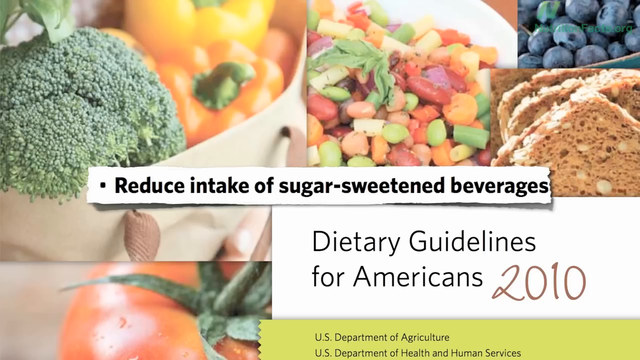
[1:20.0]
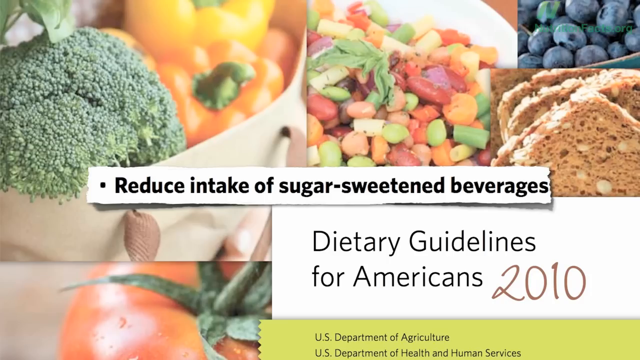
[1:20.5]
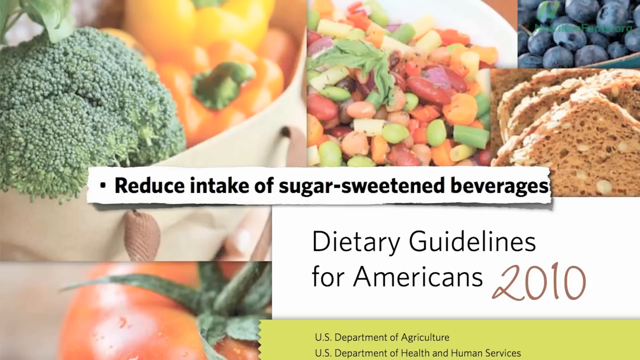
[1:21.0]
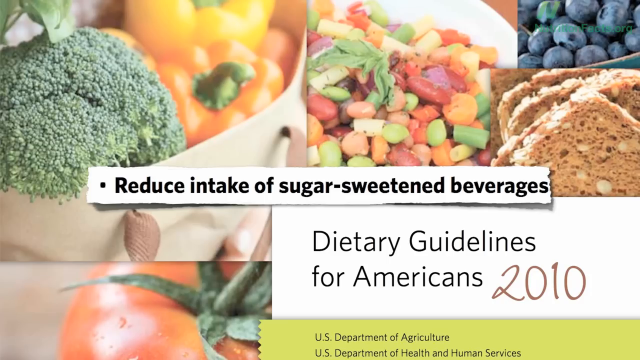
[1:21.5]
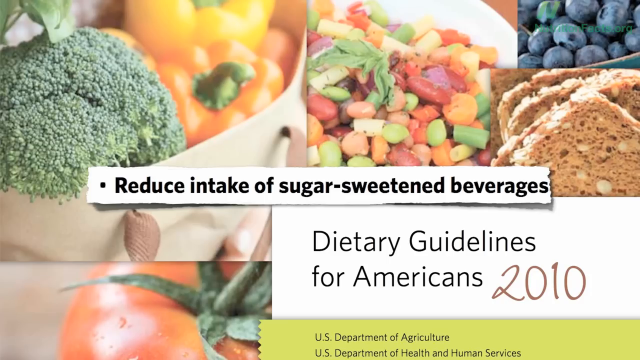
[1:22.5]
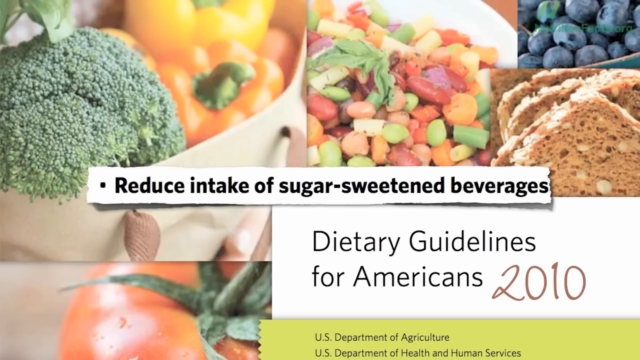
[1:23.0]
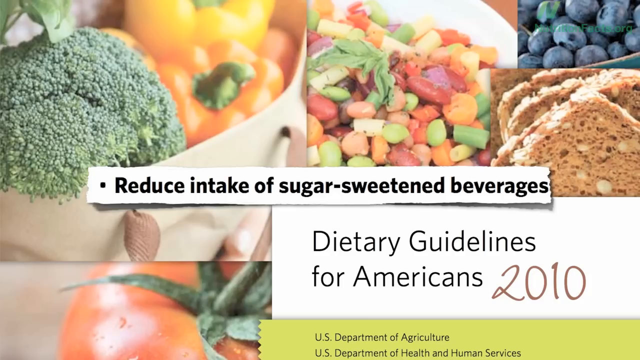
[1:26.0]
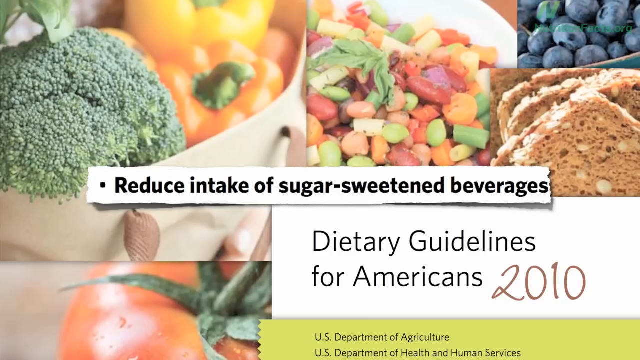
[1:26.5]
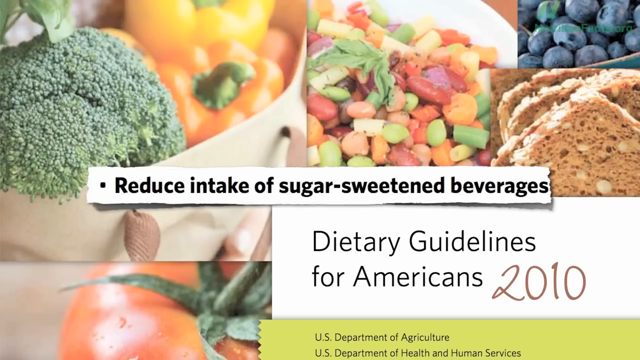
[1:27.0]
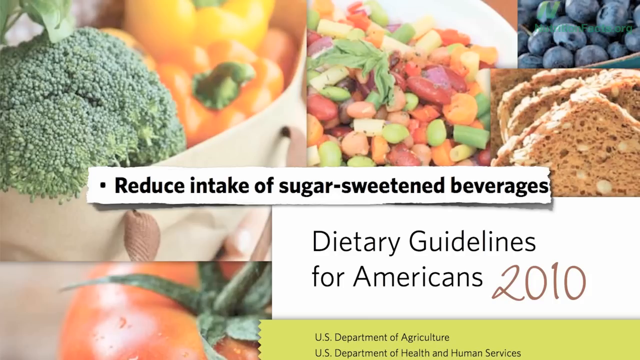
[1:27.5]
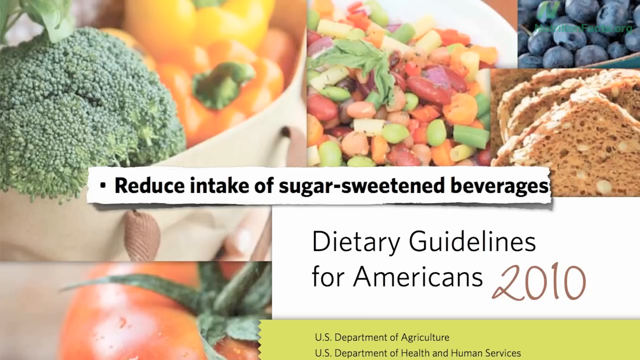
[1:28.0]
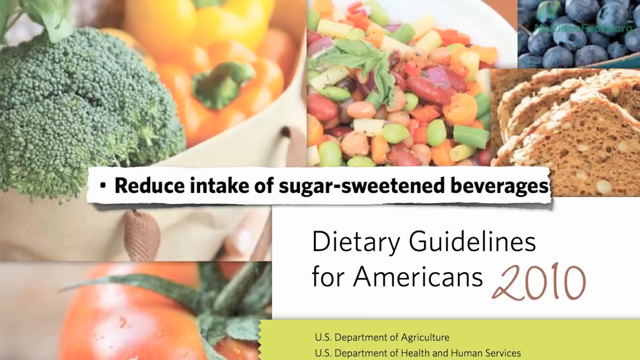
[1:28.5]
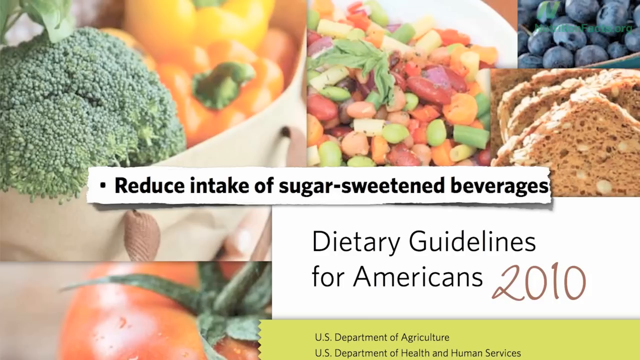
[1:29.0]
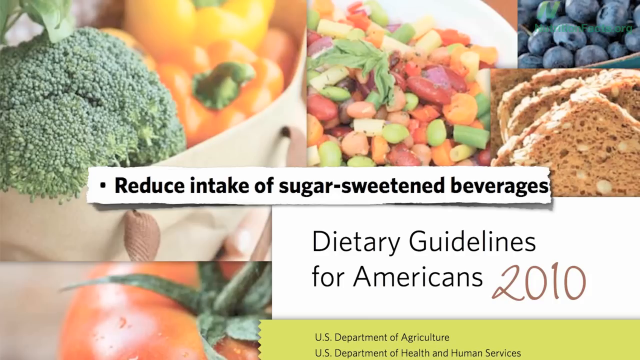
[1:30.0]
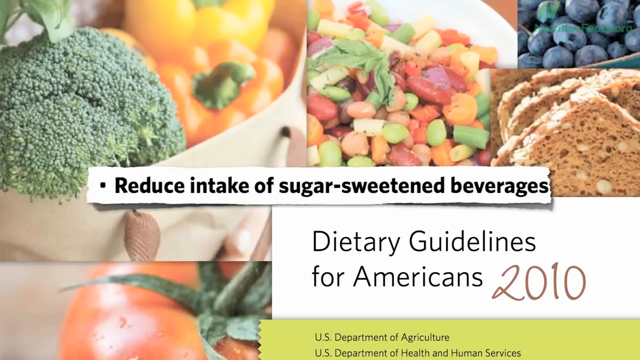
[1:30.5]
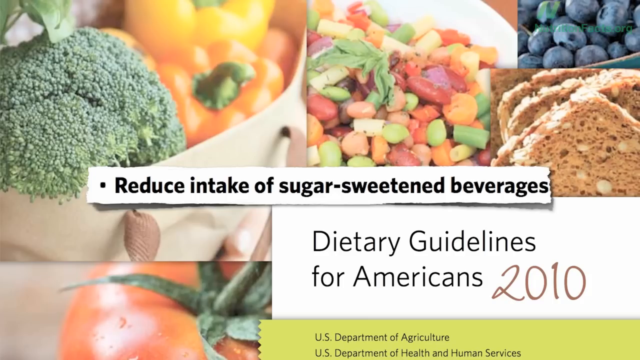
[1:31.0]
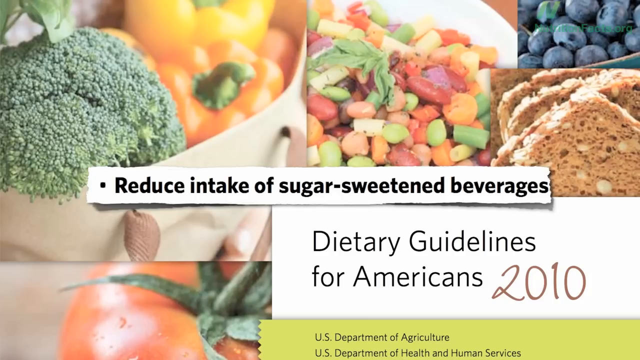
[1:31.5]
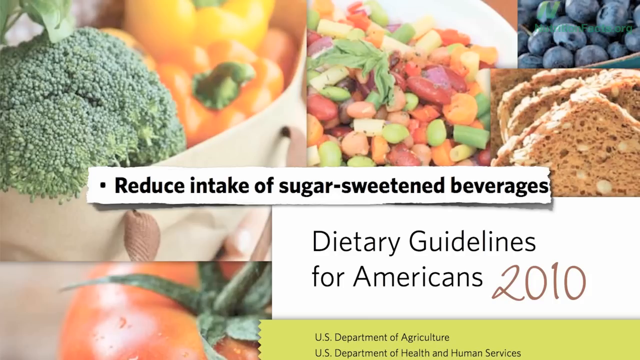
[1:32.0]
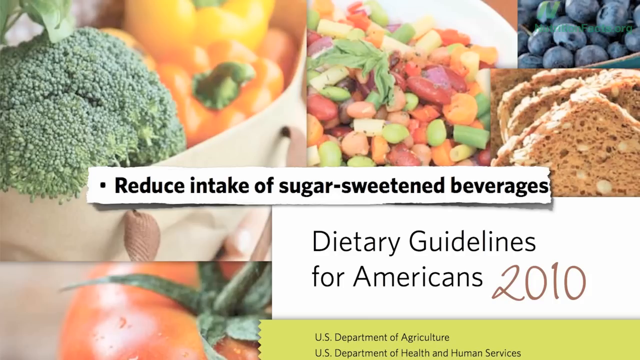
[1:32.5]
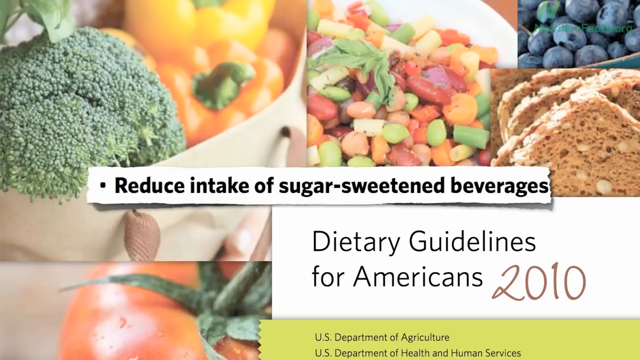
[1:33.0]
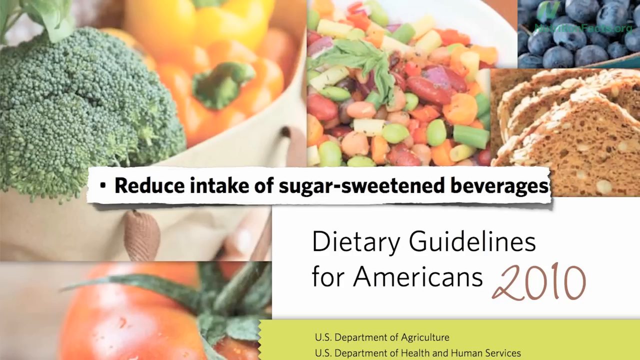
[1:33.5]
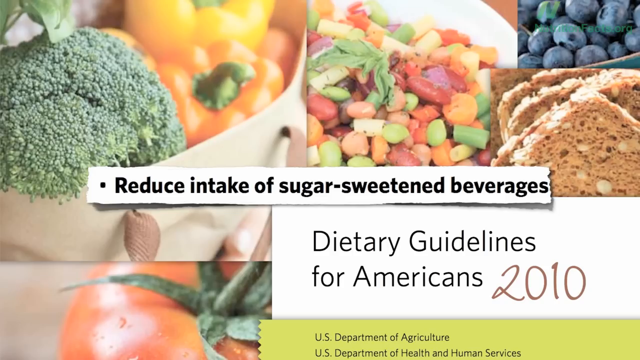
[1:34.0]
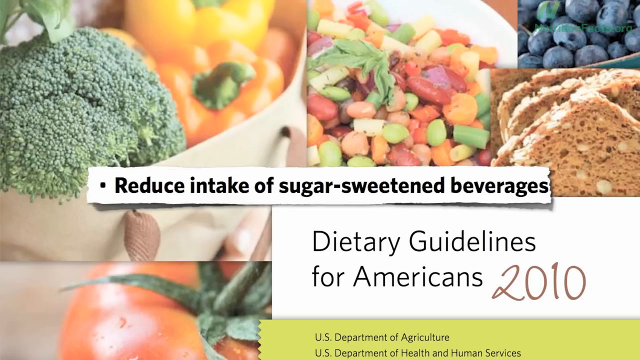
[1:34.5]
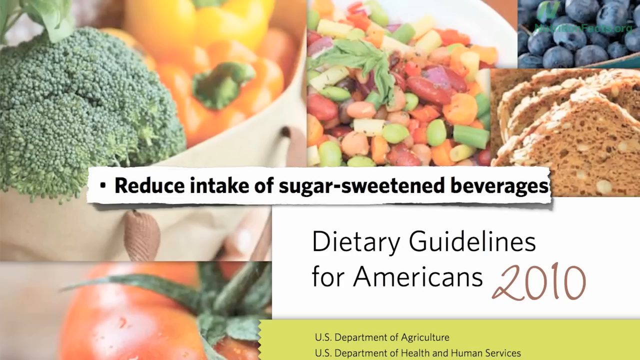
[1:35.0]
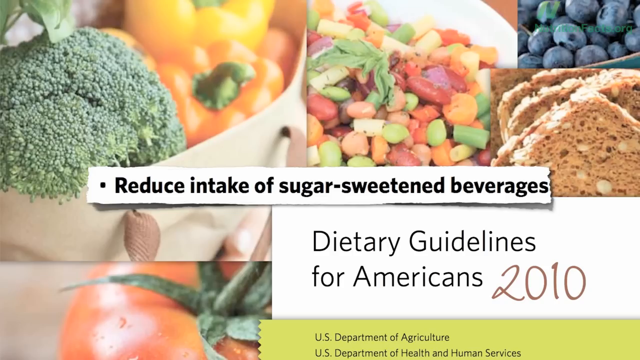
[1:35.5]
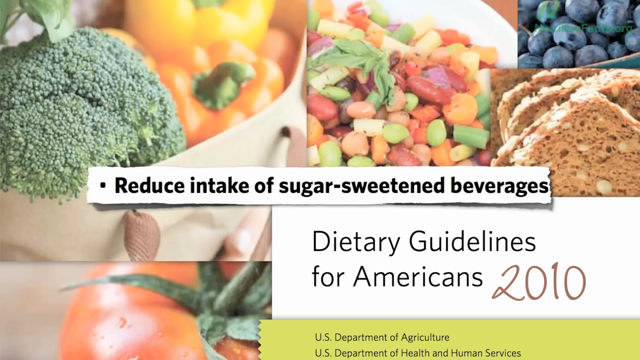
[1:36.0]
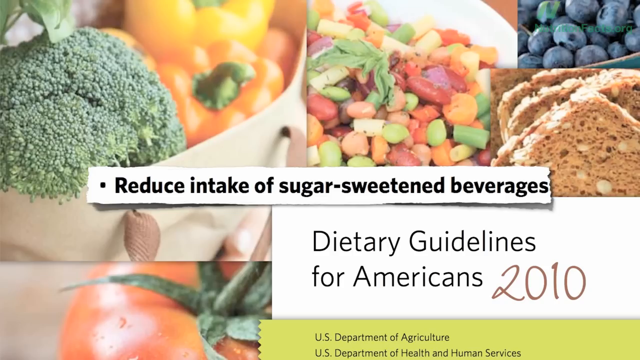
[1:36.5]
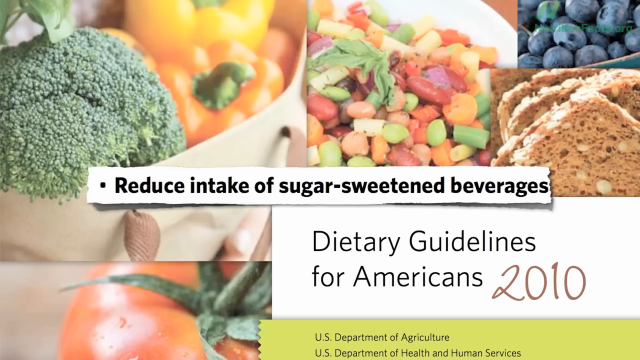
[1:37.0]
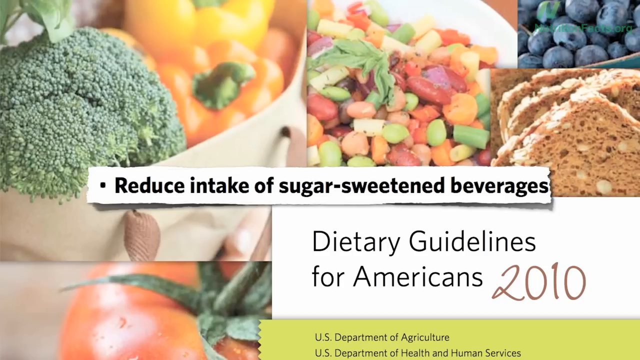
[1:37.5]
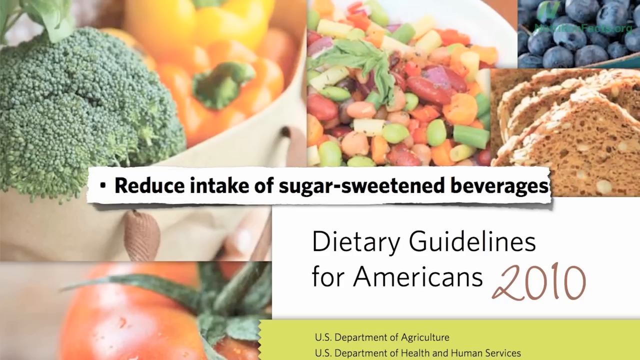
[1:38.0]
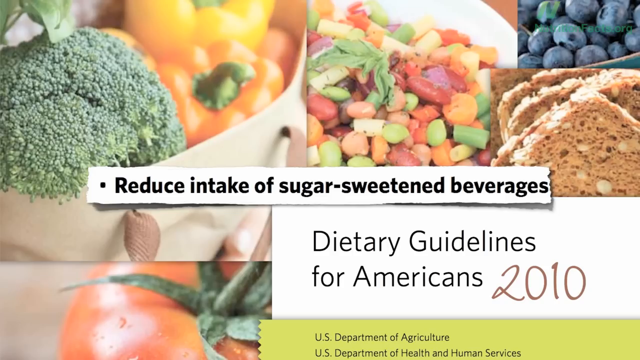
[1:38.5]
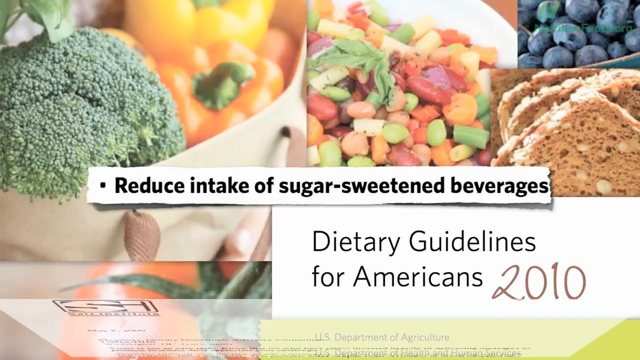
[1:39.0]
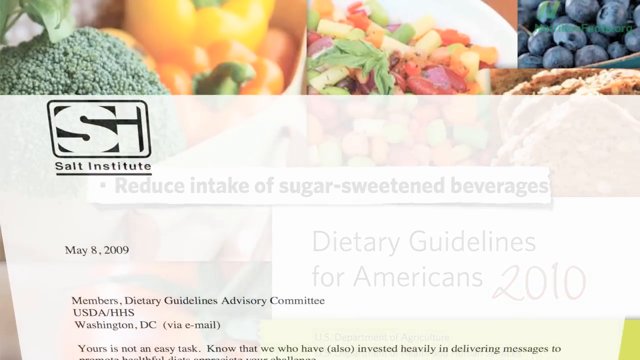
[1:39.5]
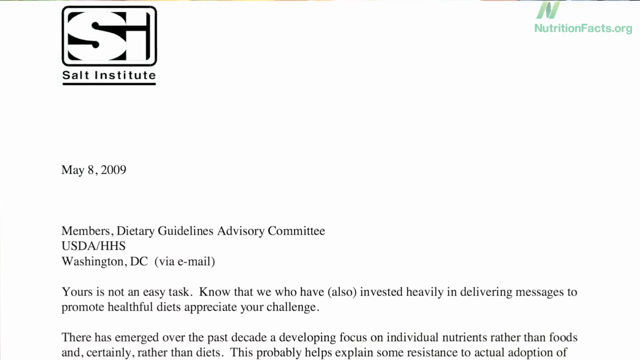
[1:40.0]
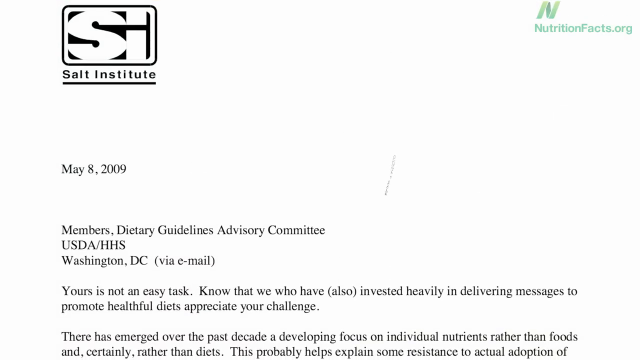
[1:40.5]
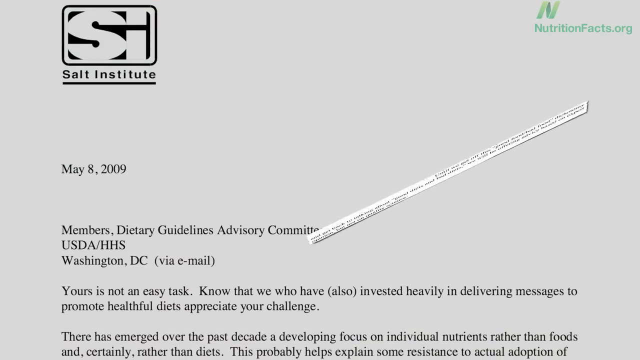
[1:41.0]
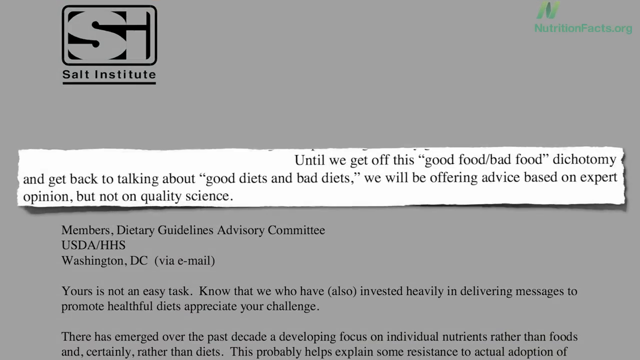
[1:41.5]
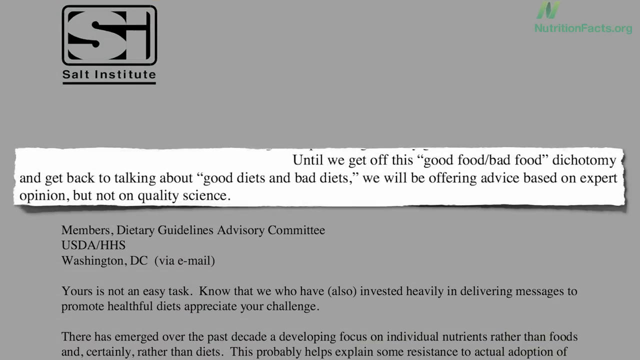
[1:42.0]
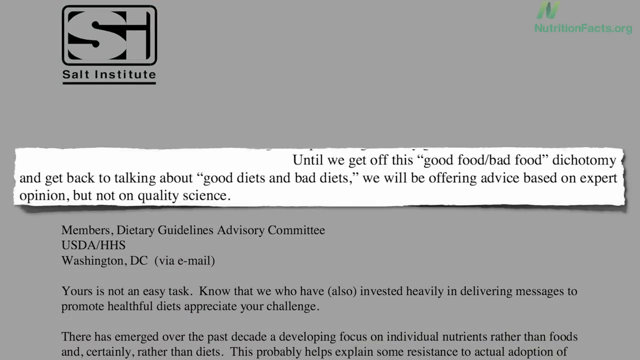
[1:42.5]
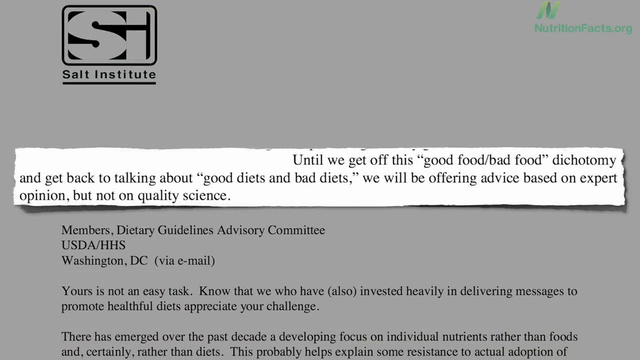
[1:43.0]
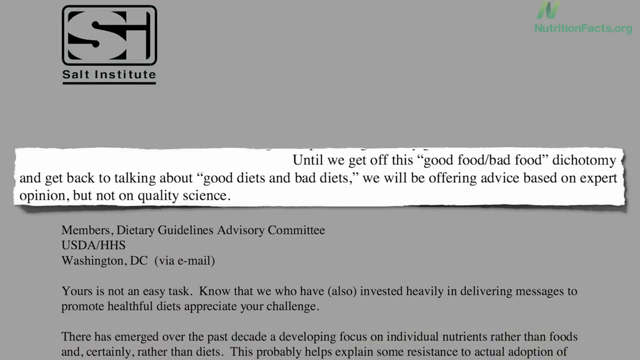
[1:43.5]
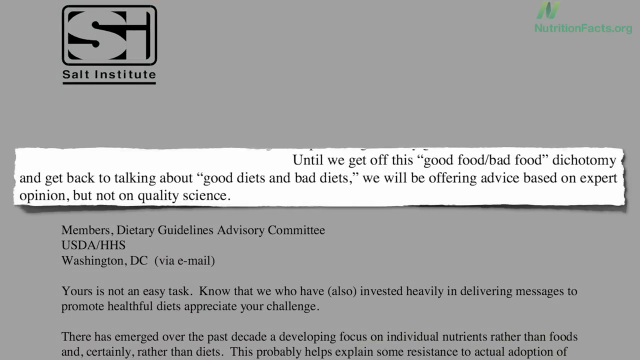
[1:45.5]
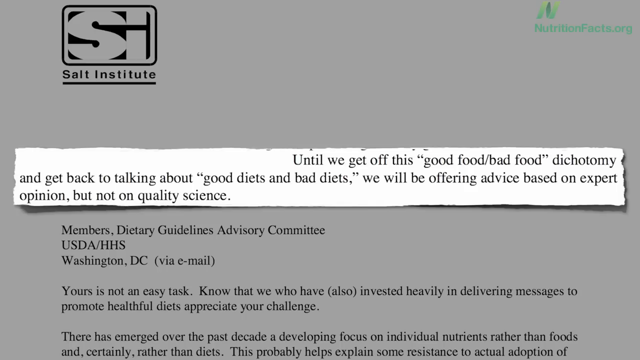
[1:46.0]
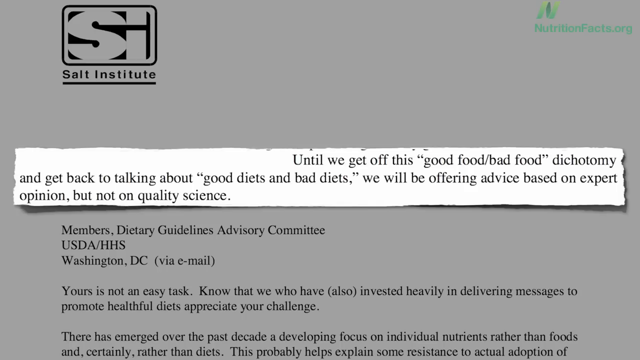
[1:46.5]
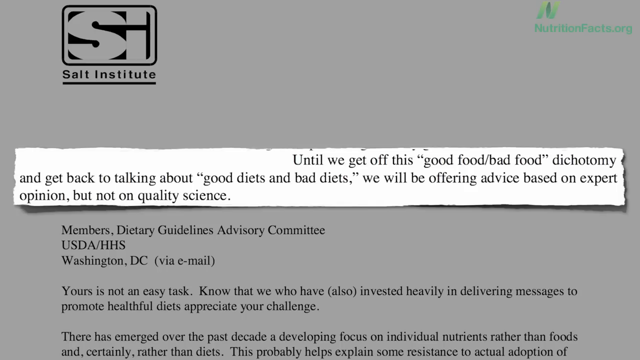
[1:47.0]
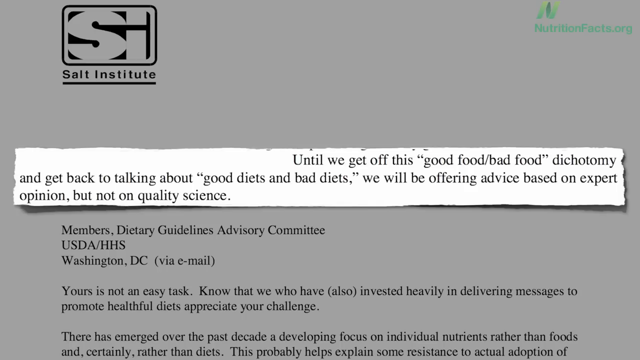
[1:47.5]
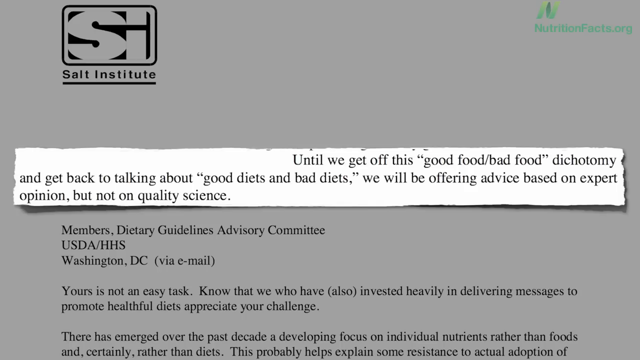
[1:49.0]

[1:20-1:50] The image stays on the collage of foods with the words "Dietary Guidelines for Americans 2010" on screen. Another slide then flips up onto the screen, with a logo on the top left reading "Salt Institute SI" in a black rectangular border. Underneath is text reading "May 8th 2009 members Dietary Guidelines Advisory Committee USDA/HHS Washington DC via email", followed by a letter that includes "yours is not an easy task" and "there has emerged over the past decade a developing focus on individual nutrients rather than food and certainly rather than diets". The screen then dims and another small ripped-paper text box comes up, reading "until we get off this good food bad food dichotomy and get back to talking about good diets and bad diets will be offering advice based on expert opinion but not on quality science".